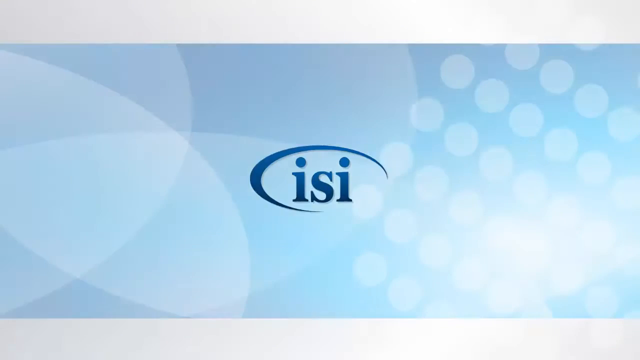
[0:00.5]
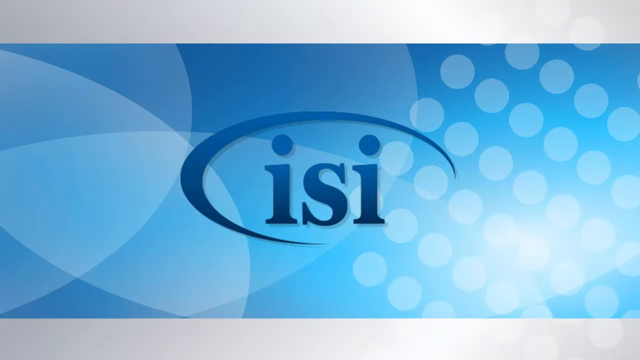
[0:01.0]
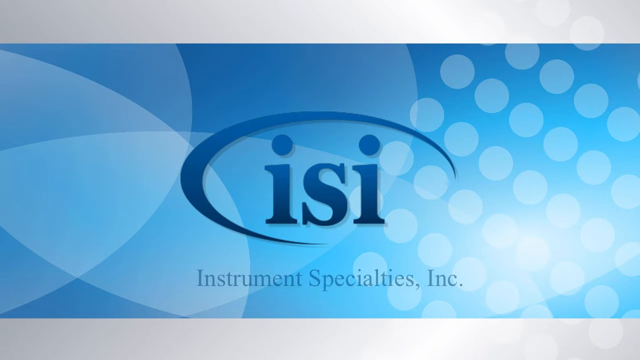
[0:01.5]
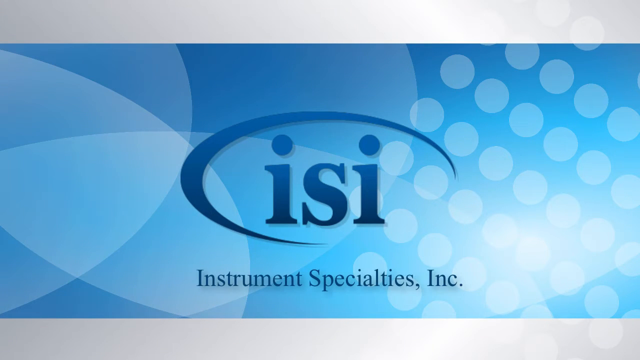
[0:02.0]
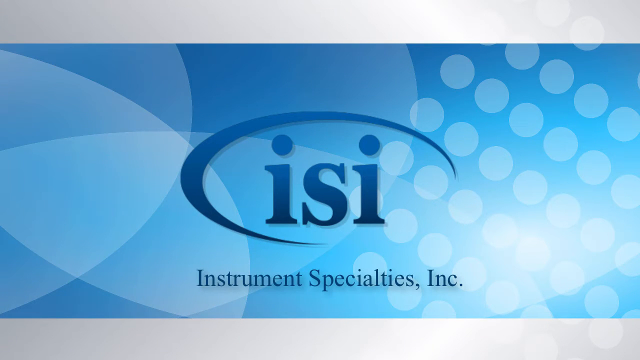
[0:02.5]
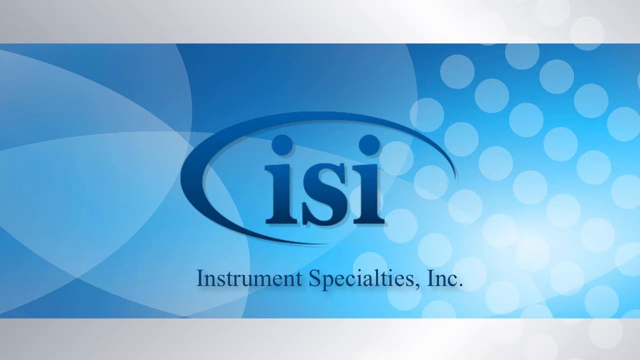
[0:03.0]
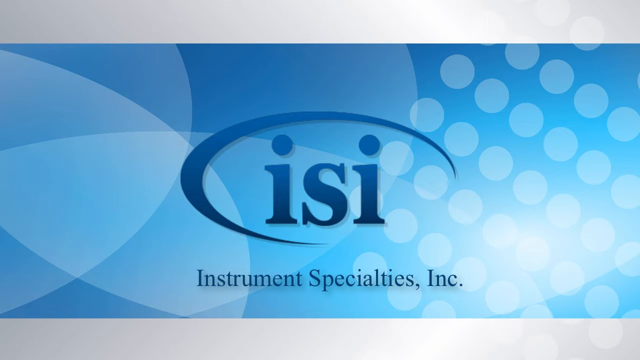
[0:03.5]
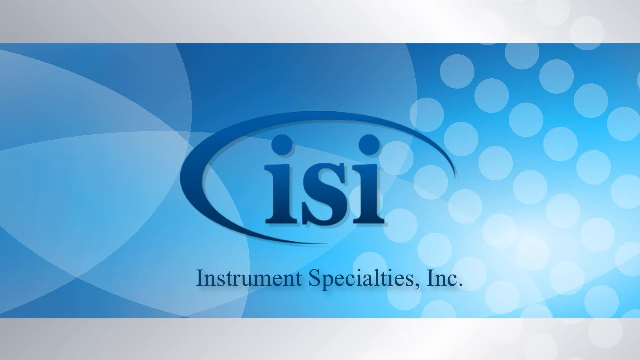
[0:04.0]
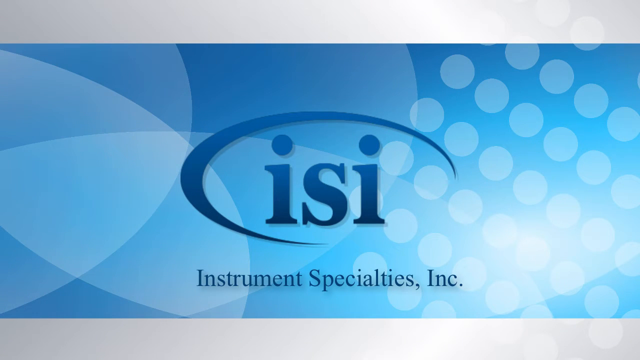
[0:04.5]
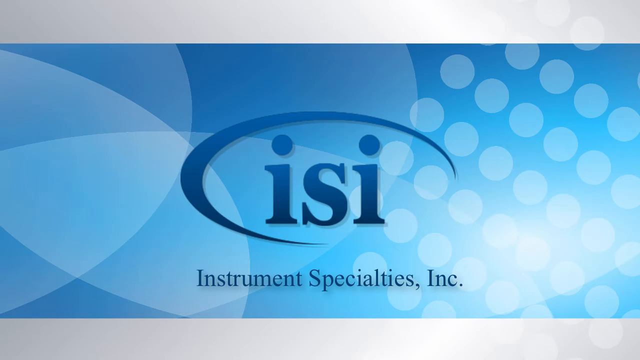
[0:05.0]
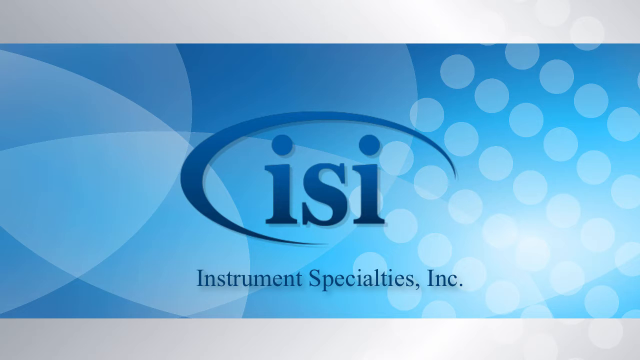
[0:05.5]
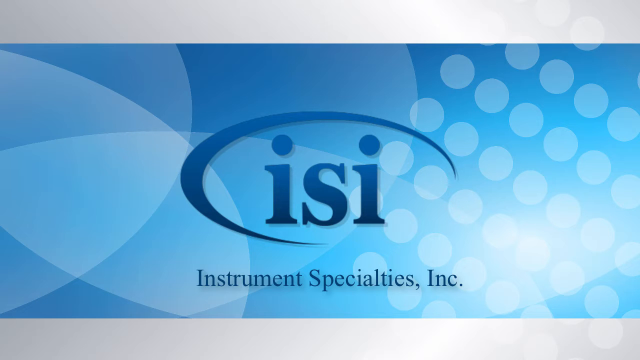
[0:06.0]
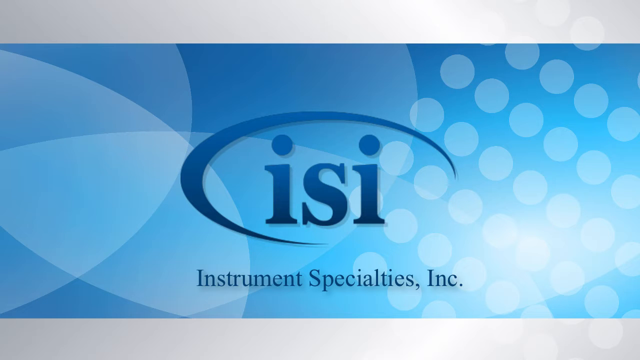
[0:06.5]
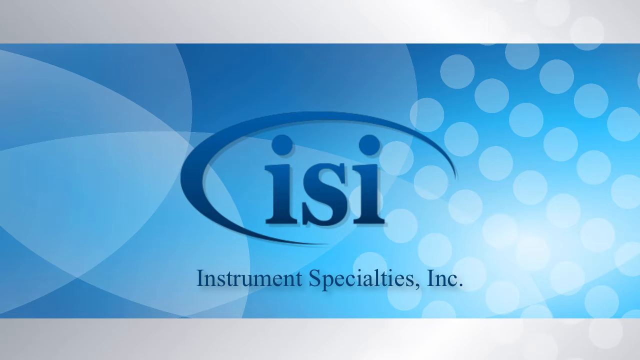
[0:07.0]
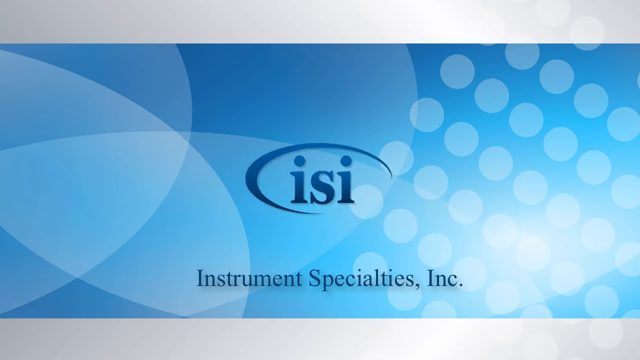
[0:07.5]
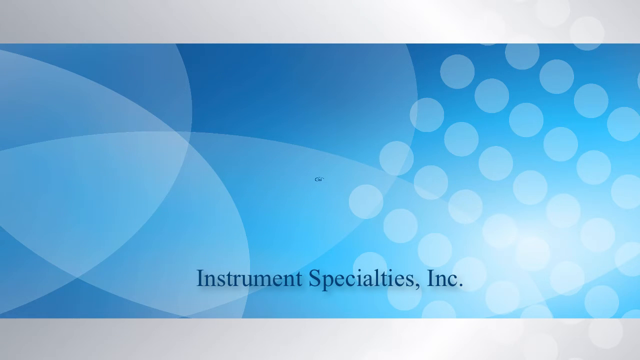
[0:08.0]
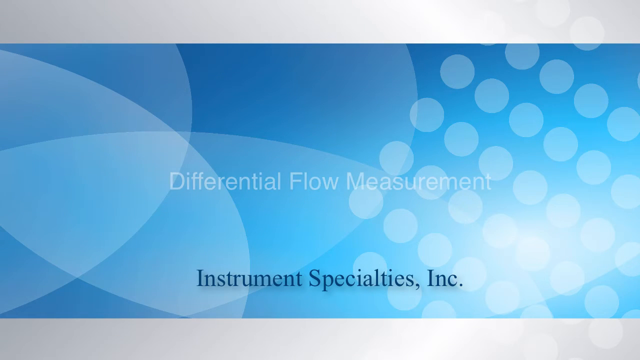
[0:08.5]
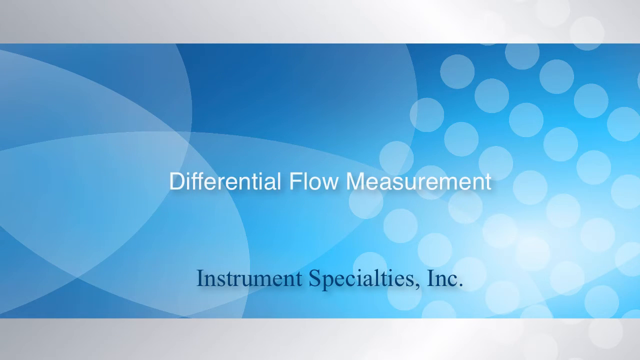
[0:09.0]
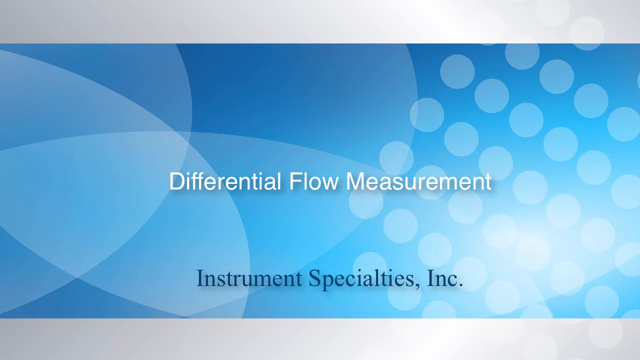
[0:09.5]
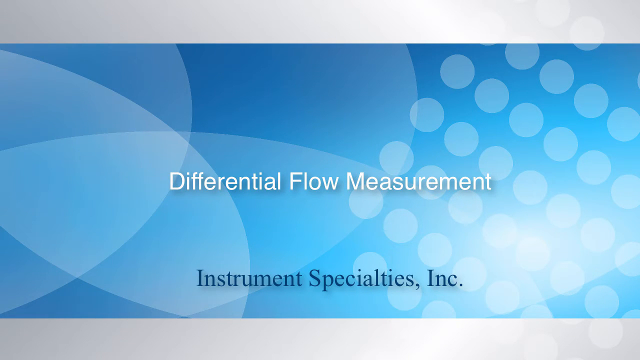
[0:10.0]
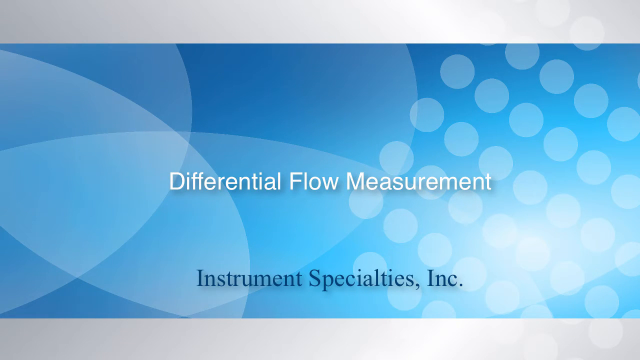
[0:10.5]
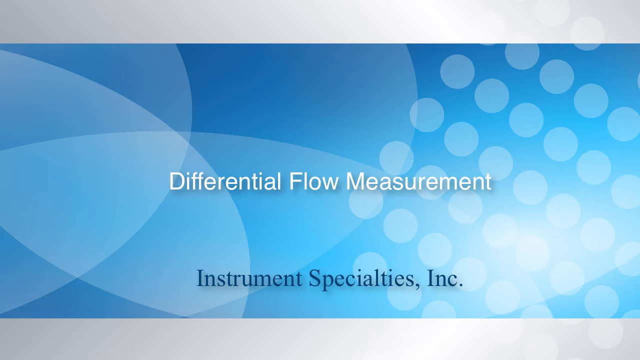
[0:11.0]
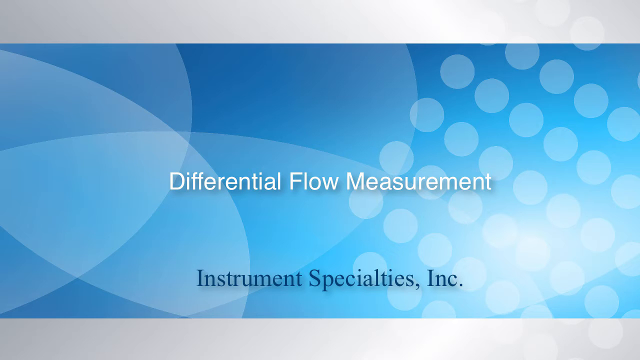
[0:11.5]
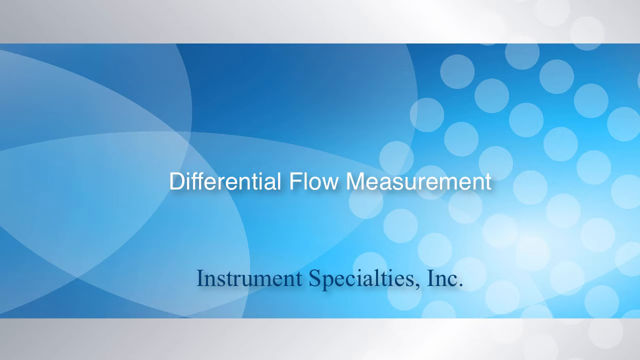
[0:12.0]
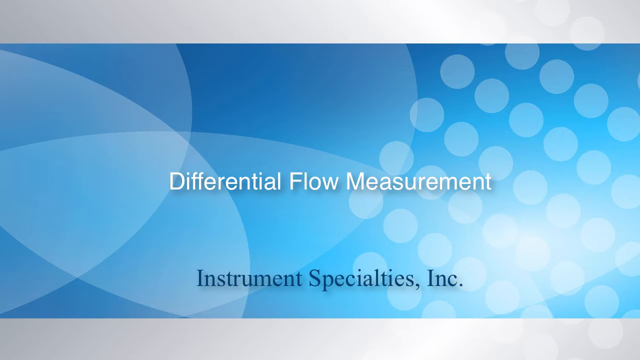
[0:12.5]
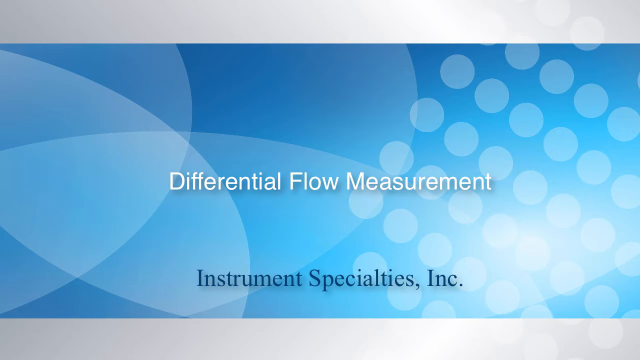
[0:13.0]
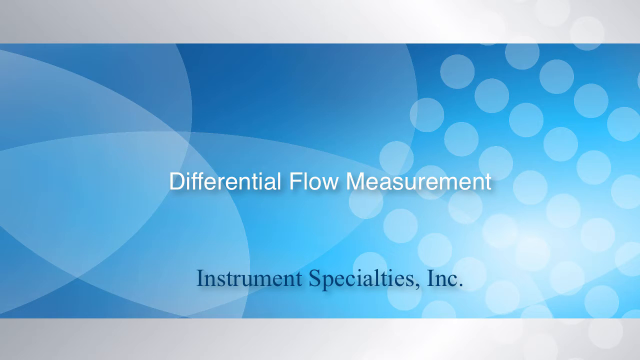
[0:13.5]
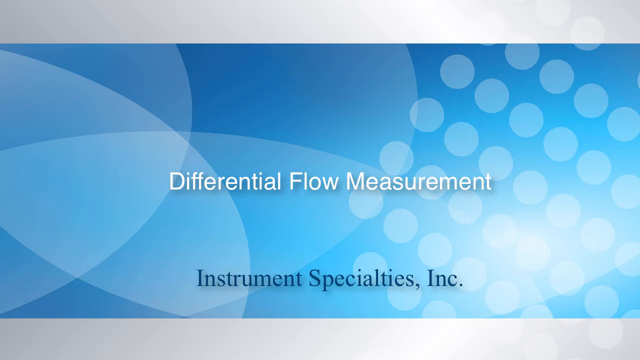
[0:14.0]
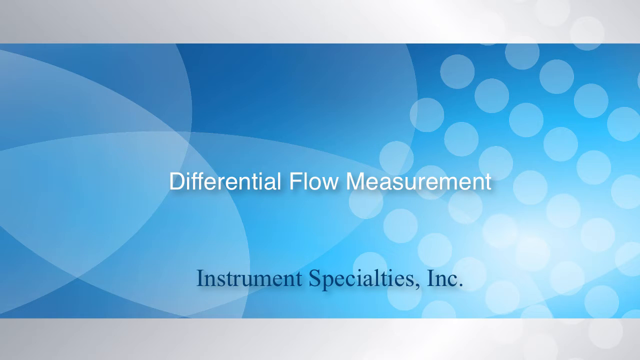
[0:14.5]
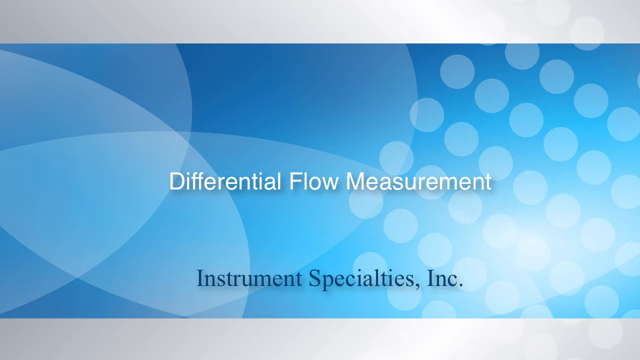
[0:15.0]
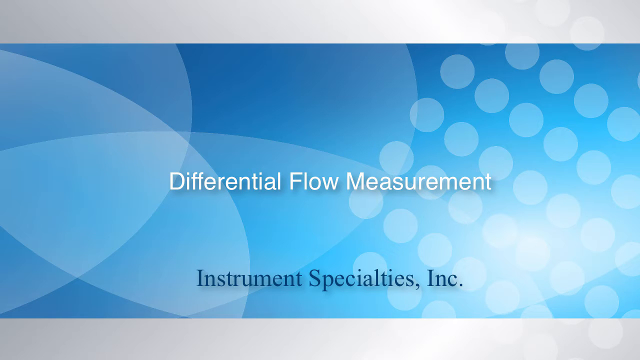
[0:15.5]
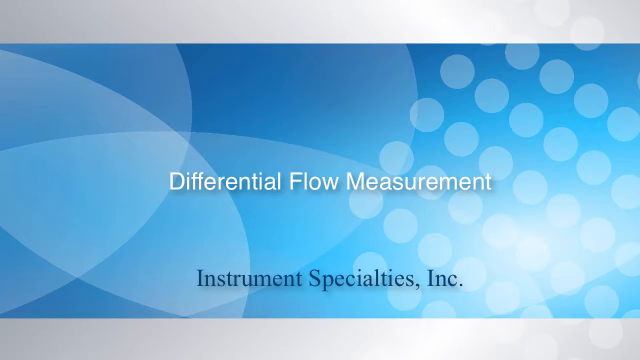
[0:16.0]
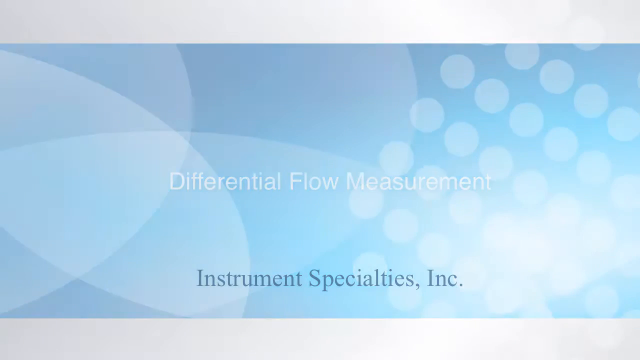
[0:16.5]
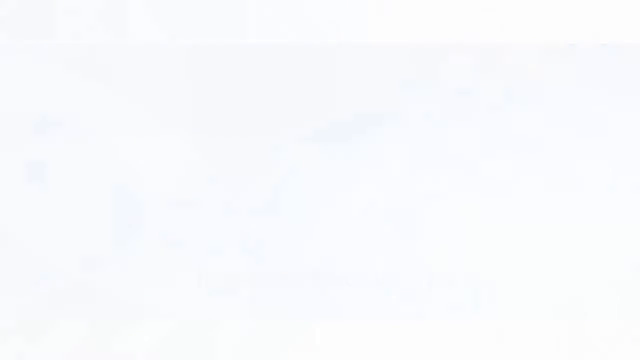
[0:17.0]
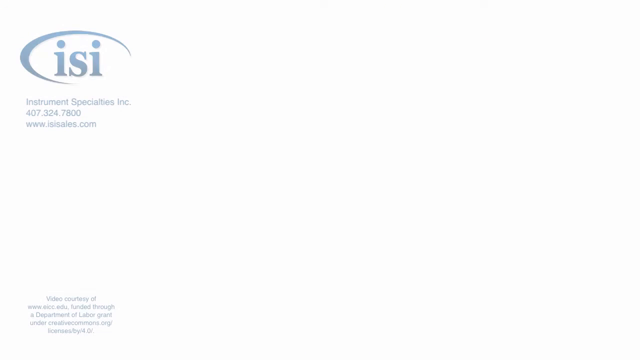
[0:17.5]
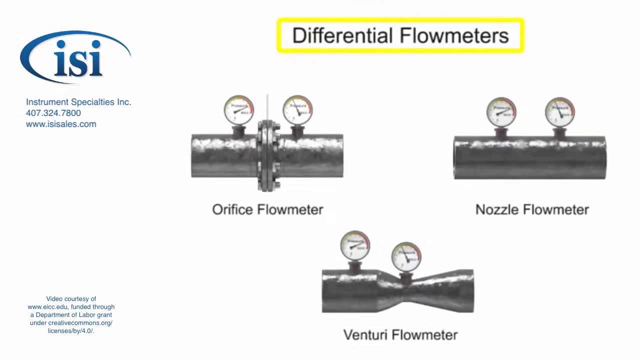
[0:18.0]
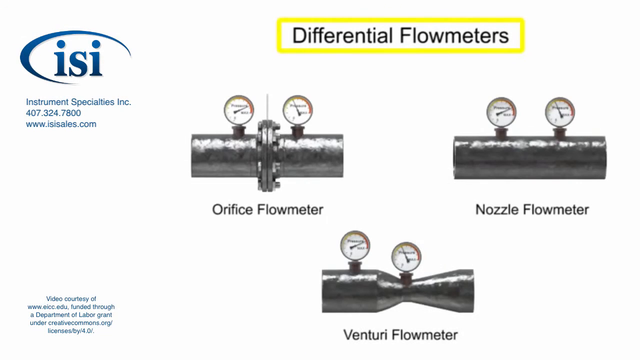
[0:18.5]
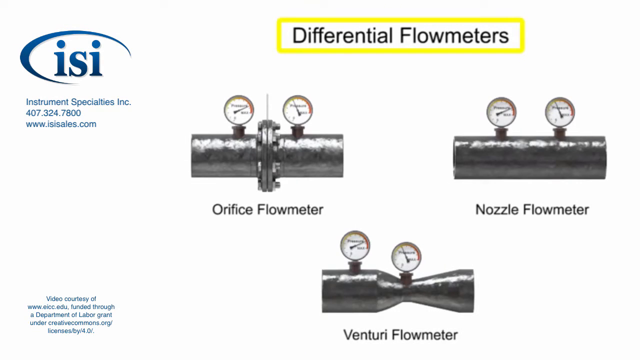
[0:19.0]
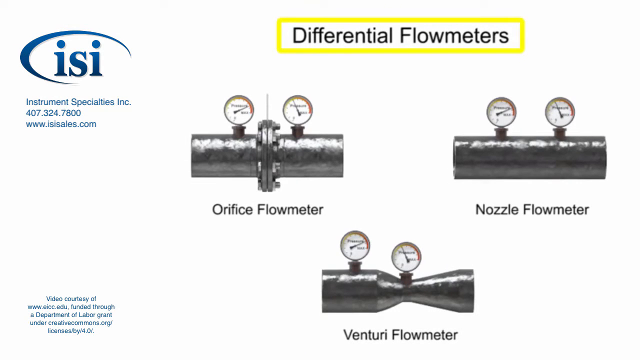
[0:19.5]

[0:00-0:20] The video opens on a white screen, then the center of the screen turns blue horizontally across, with light blue dots on the background. A sort of semi-circle appears, running from the left side of the screen to the right, with the bottom right corner of the circle missing. Inside the circle it says "ISI"; the circle and letters are blue. At the bottom, the words "instruments specialities, Inc." appear. Then the words "differential flow measurement" appear in white letters. The screen goes white. The ISI logo comes up at the top left of the screen, and below it, it says "Instrument Specialties, Inc." There is a number, "407.324.7800", and below that, "www.isisales.com". To the right of that is a picture of a pipe with two gauges on it; below this pipe it says "orifice flow meter". To the right is another pipe with two gauges on it, labeled "nozzle flow meter". Below that is another pipe with two gauges on it, labeled "venturi flow meter". The pipe on the top left looks like two pipes that come together and are clamped together with screws. The pipe on the right is a solid pipe. The pipe on the bottom looks like a rifle scope.